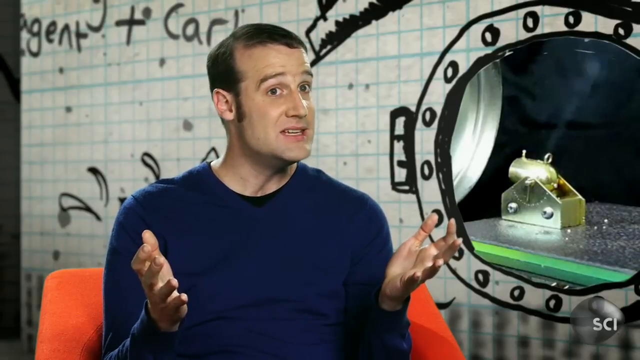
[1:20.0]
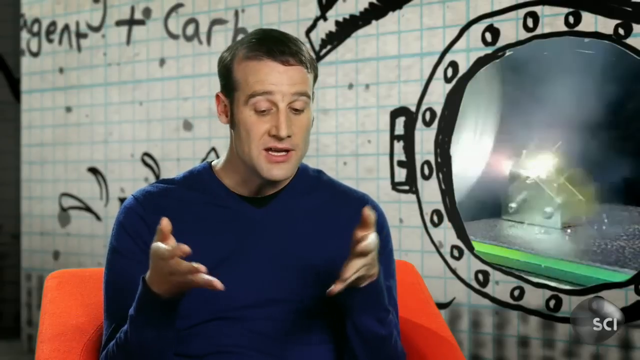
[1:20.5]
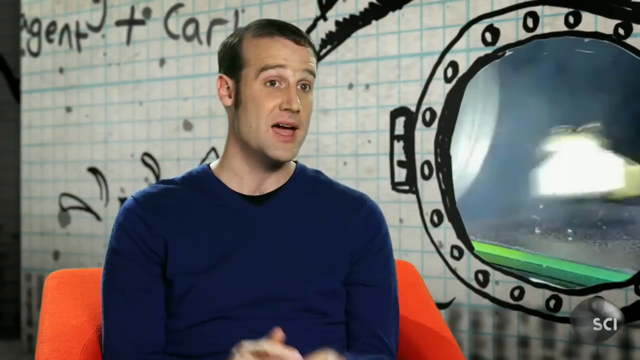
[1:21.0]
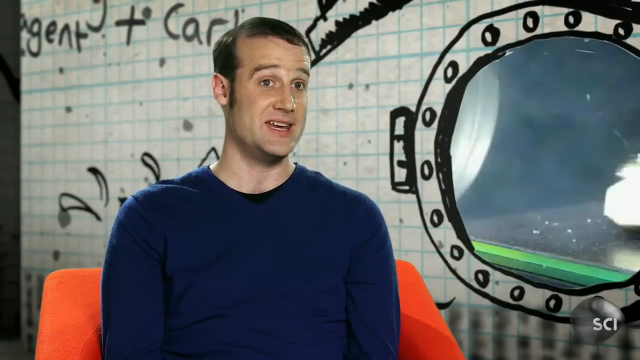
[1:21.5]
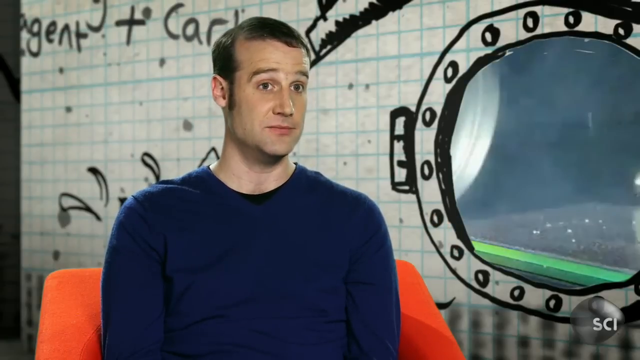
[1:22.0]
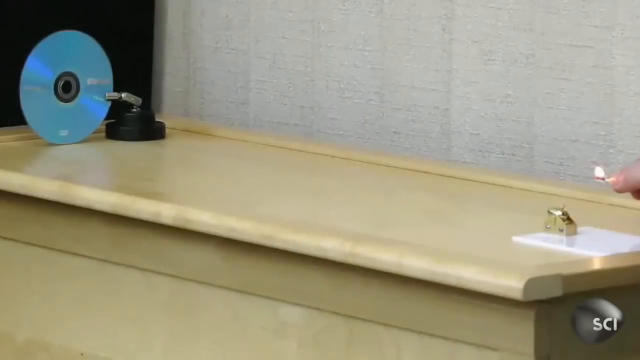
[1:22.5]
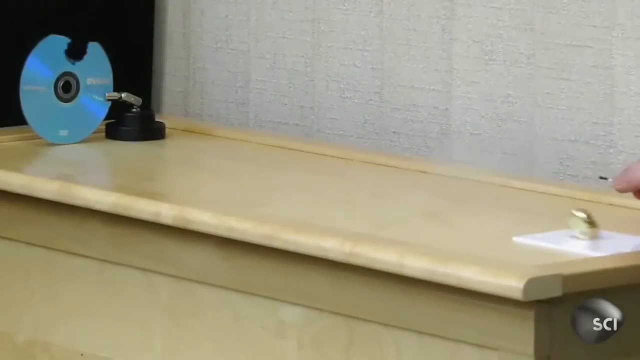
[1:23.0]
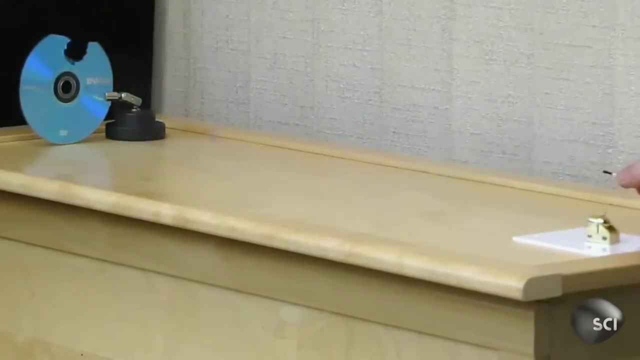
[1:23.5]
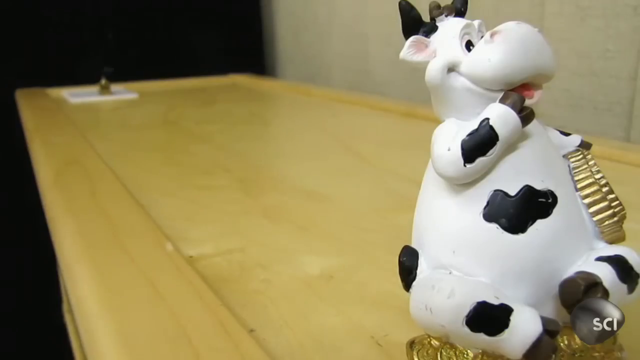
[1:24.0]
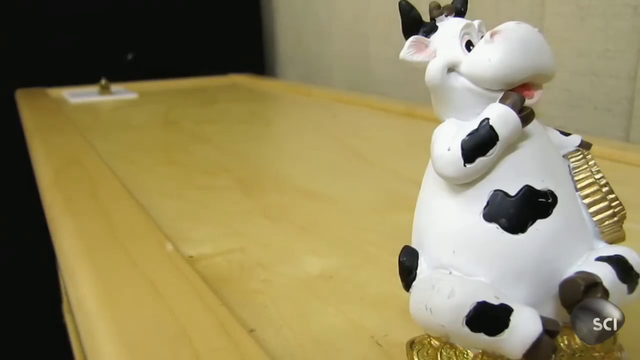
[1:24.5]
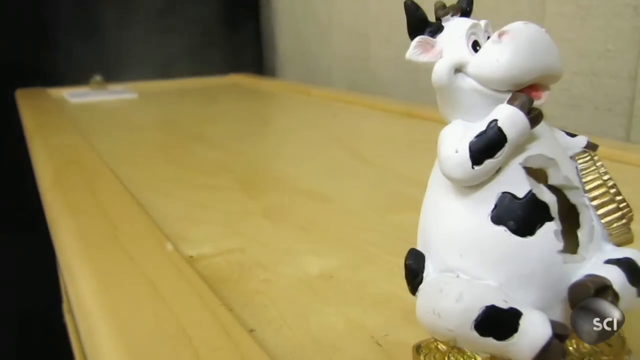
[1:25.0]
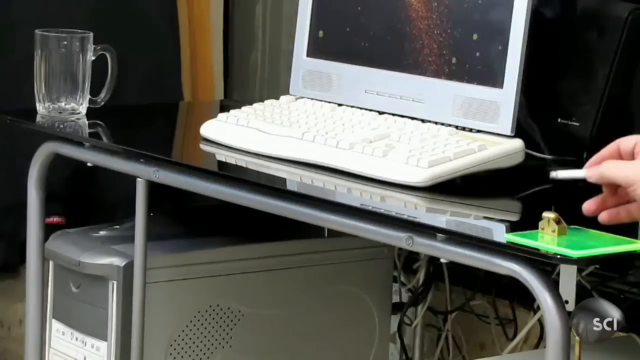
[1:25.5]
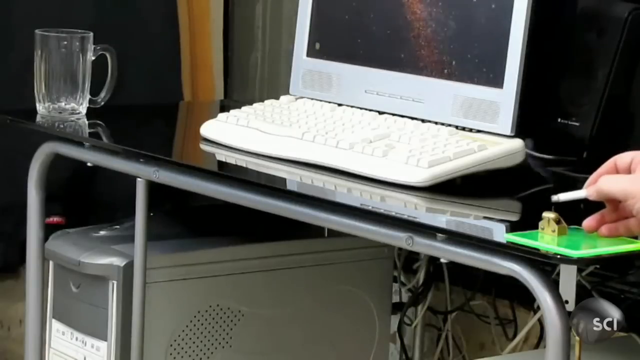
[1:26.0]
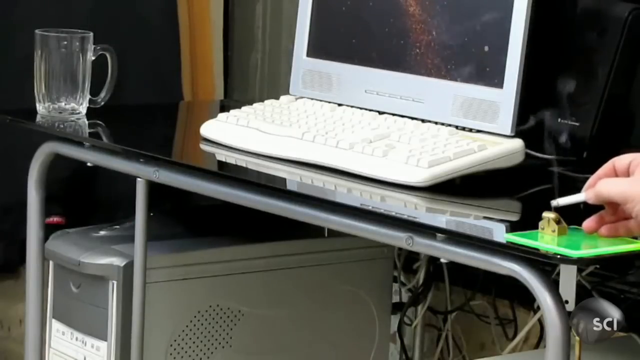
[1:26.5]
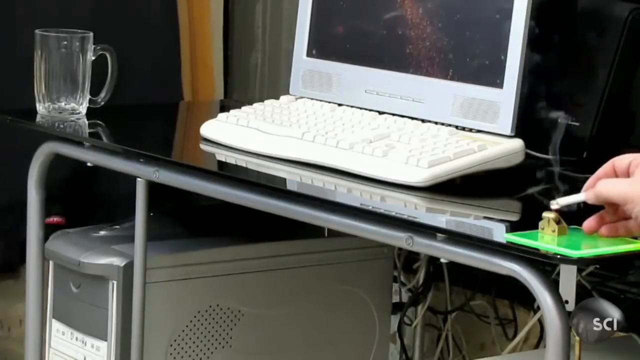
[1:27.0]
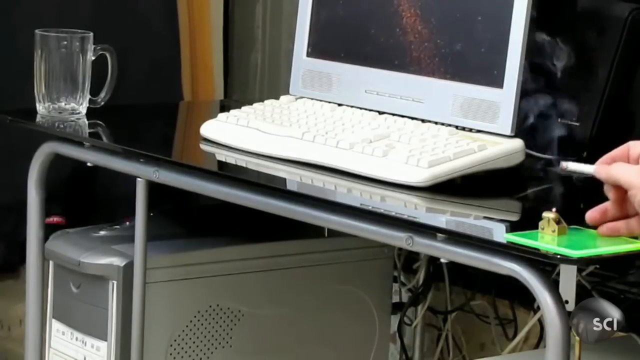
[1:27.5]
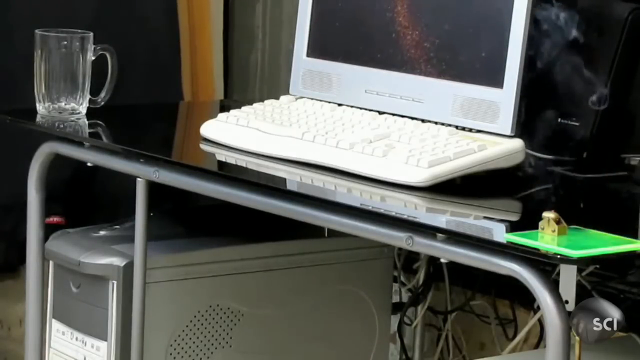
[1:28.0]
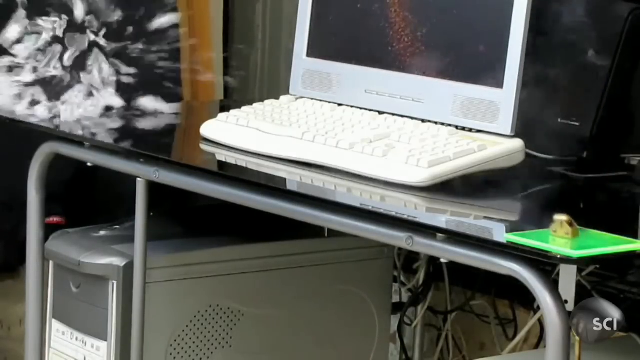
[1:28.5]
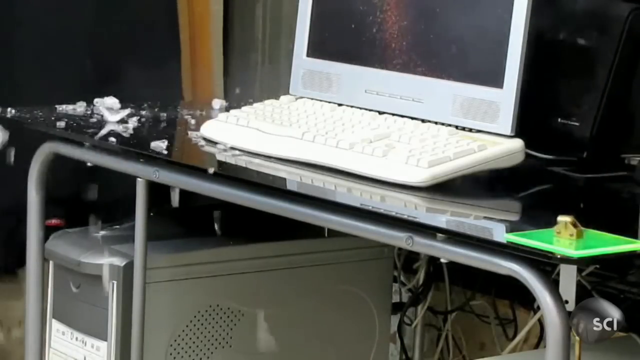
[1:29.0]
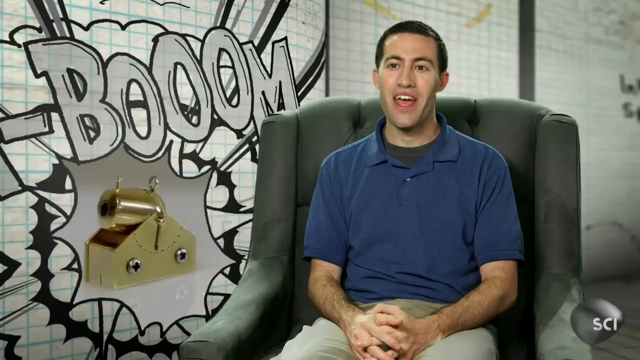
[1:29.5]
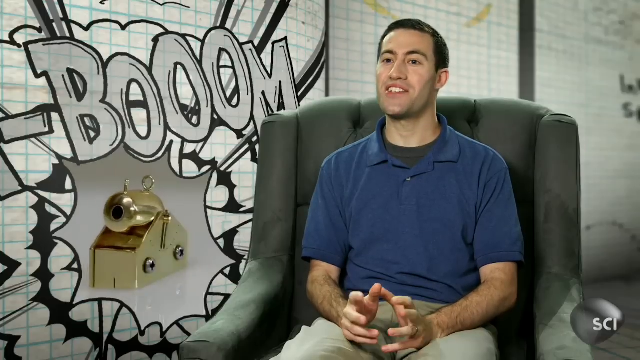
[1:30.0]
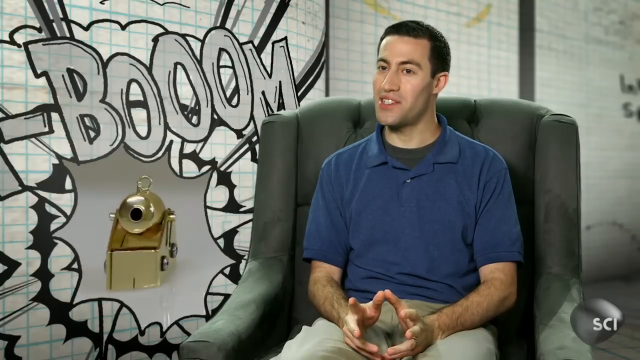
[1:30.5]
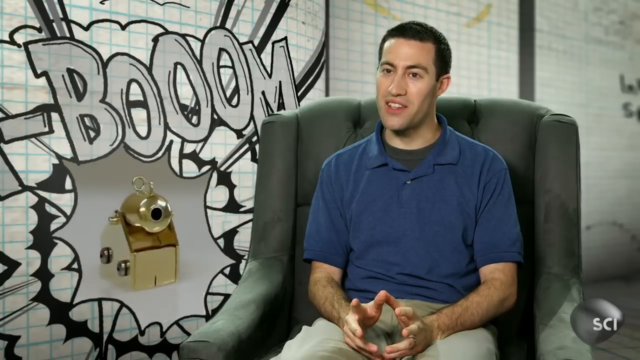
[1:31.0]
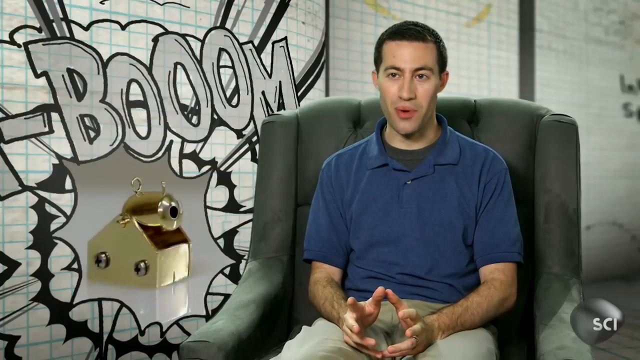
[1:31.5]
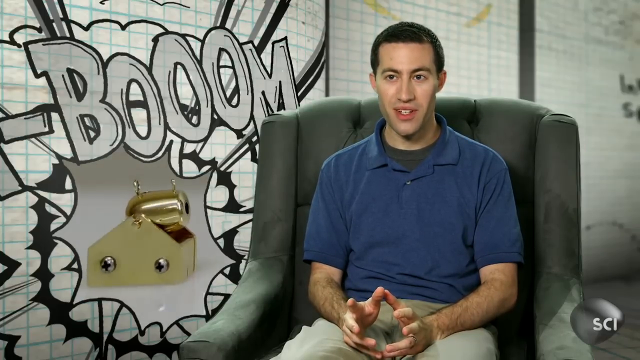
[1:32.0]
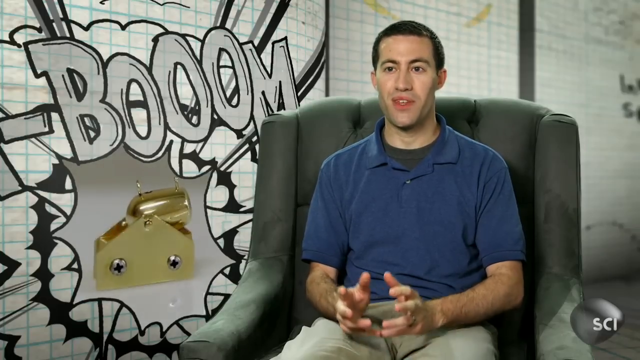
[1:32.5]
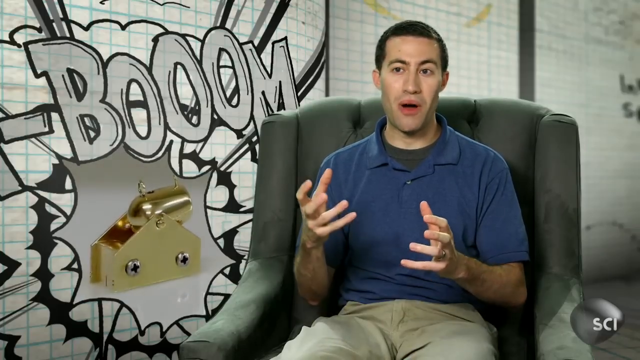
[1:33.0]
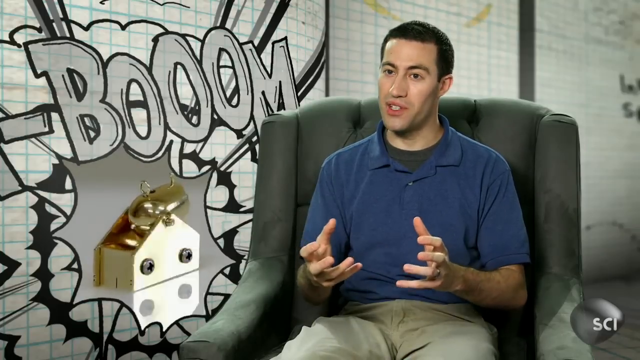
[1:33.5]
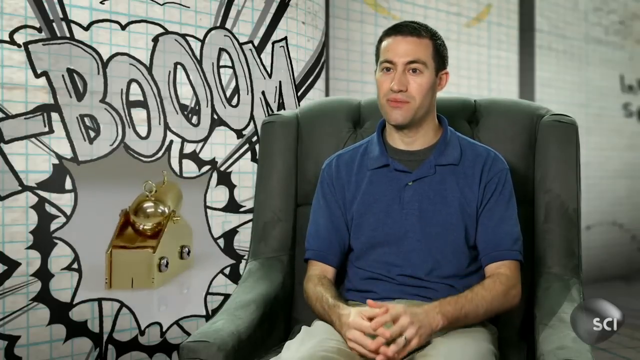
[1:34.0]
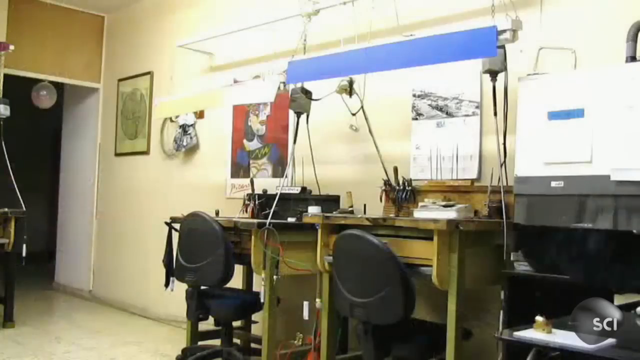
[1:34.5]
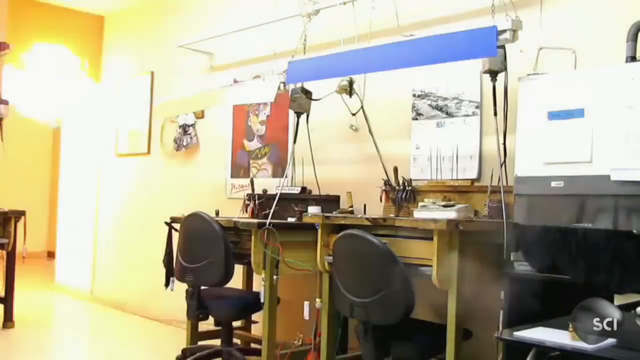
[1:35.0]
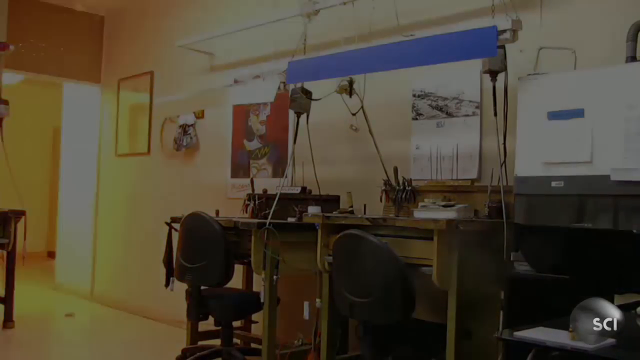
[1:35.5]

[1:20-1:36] A man in a blue shirt talks. A ceramic cow is shown, and the cannon hits a pitcher, which kind of blows up. Another man in a blue shirt talks with the word "boom" next to him. The cannon blows up various objects, including the pitcher, the ceramic cow and a CD. Another man in a blue shirt sits in a green chair, talking. Finally the cannon hits something in the room, the lights go out and the screen goes black.